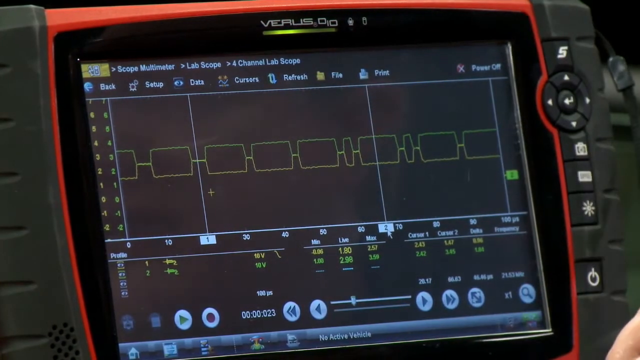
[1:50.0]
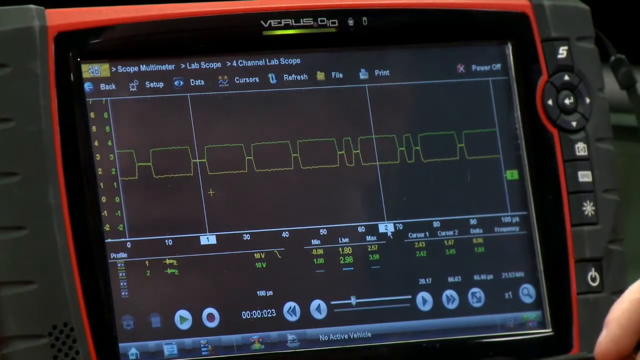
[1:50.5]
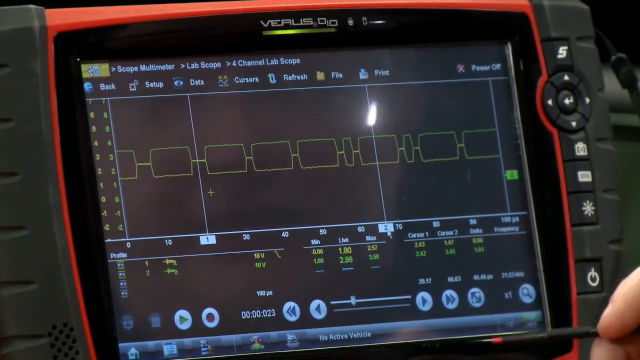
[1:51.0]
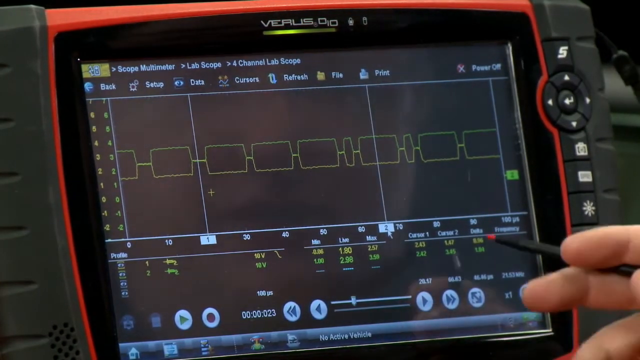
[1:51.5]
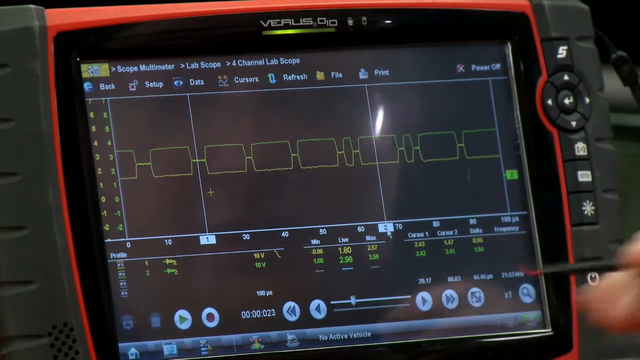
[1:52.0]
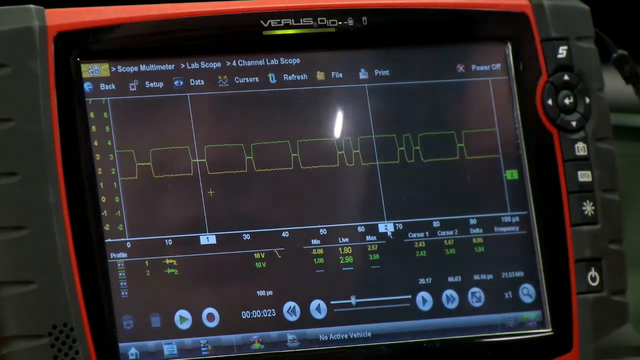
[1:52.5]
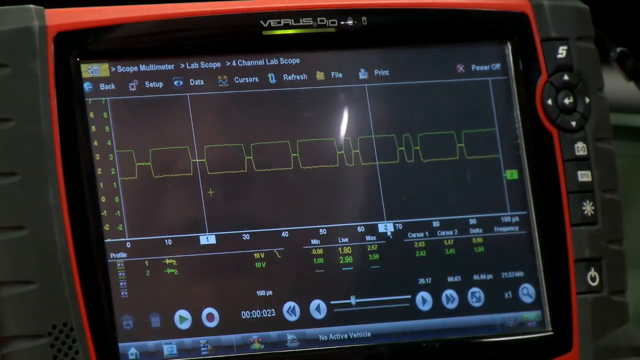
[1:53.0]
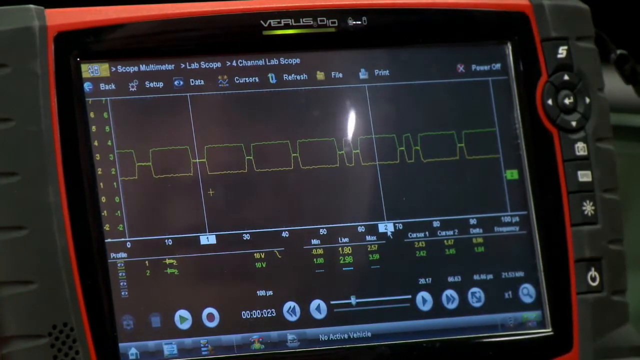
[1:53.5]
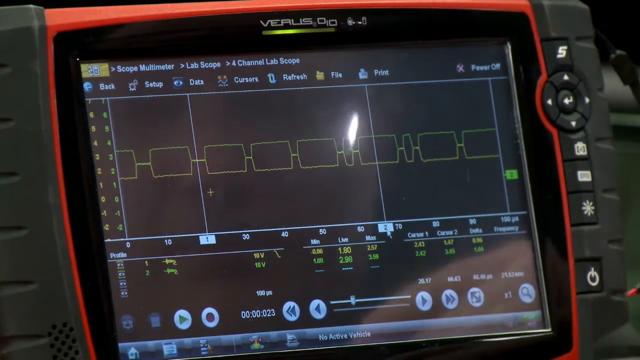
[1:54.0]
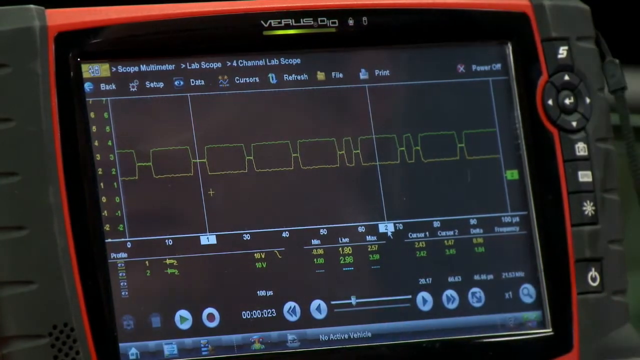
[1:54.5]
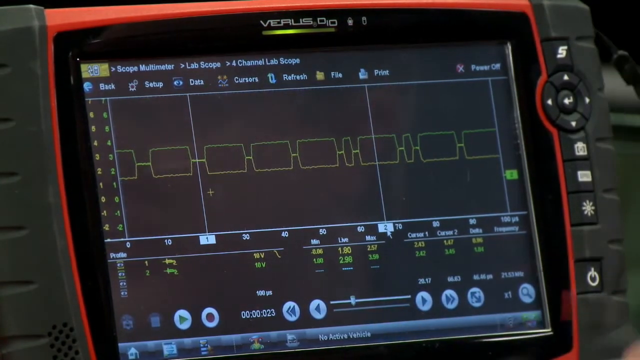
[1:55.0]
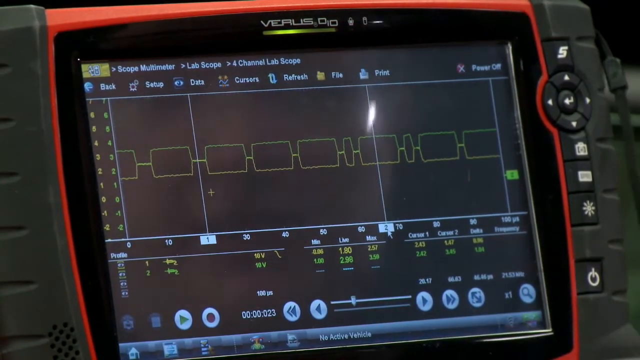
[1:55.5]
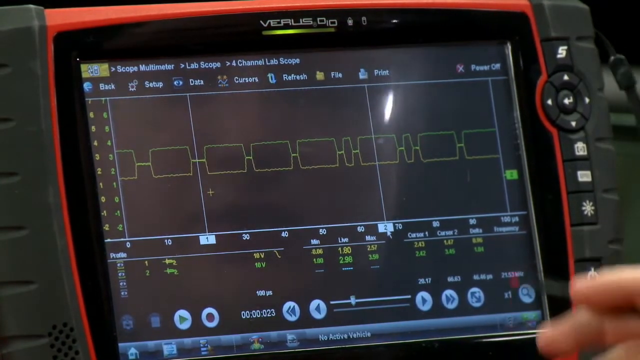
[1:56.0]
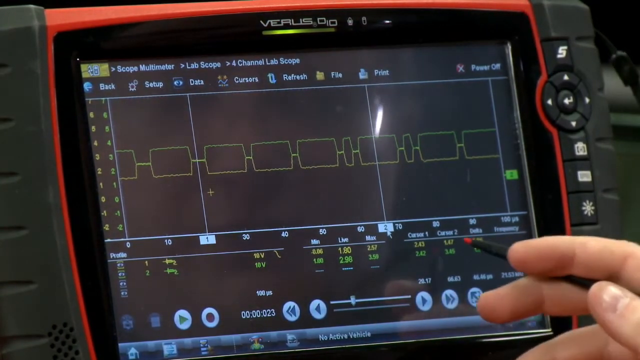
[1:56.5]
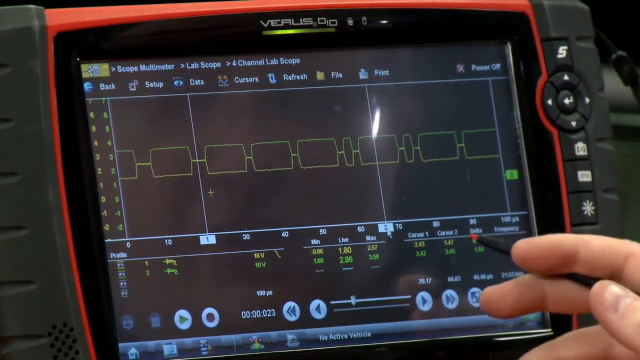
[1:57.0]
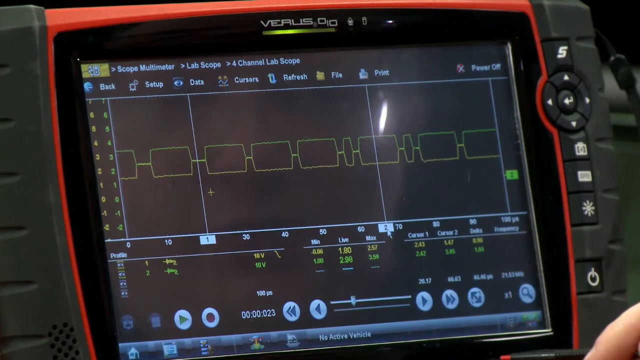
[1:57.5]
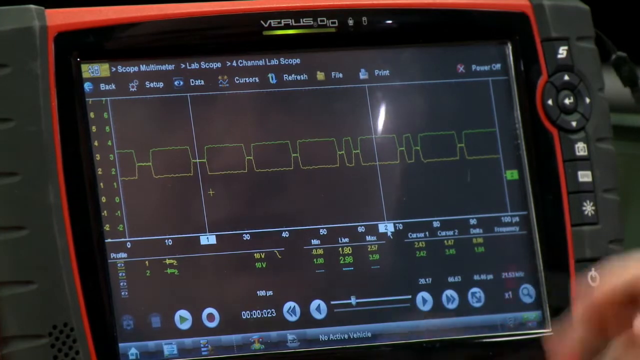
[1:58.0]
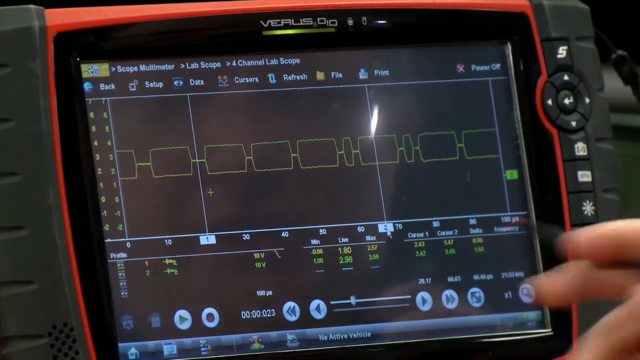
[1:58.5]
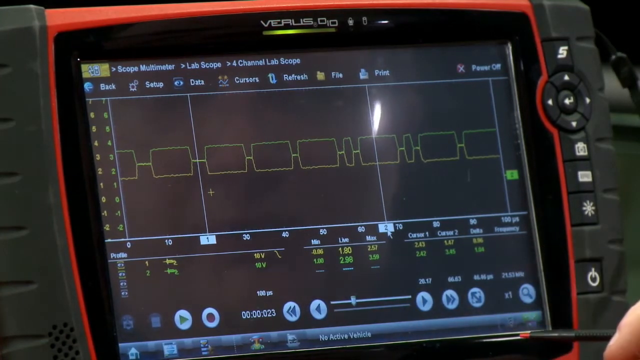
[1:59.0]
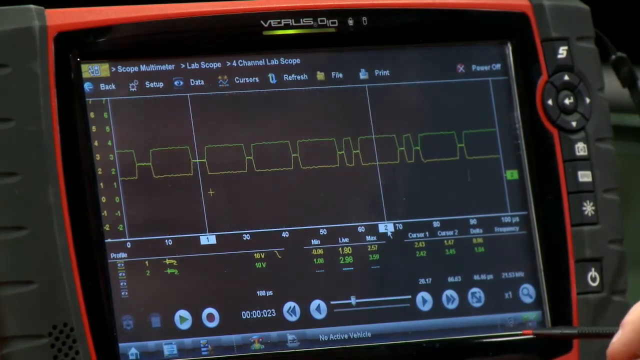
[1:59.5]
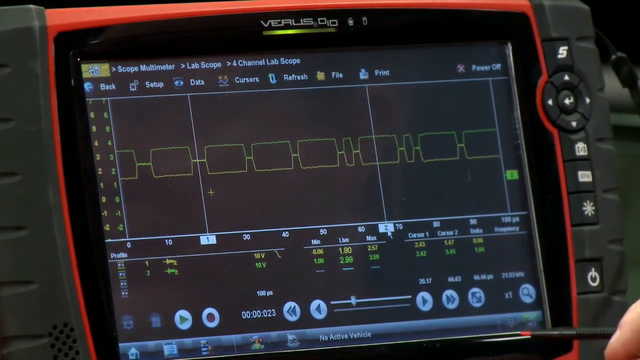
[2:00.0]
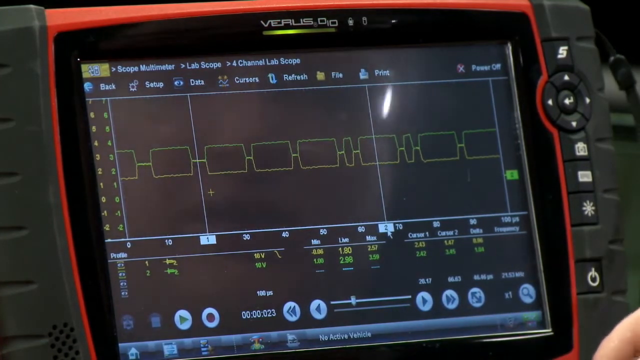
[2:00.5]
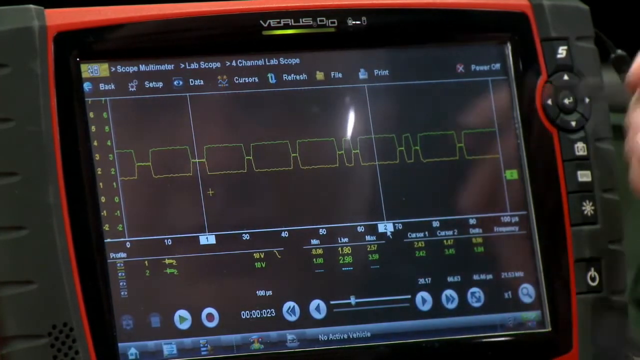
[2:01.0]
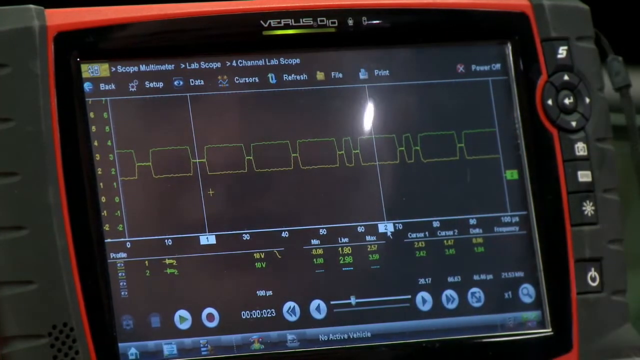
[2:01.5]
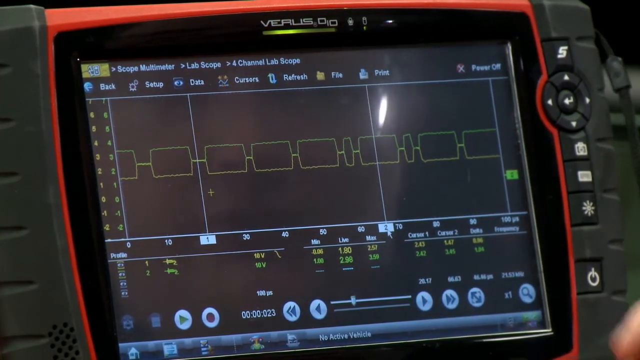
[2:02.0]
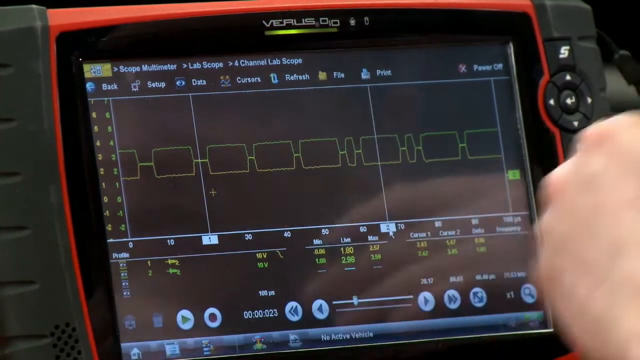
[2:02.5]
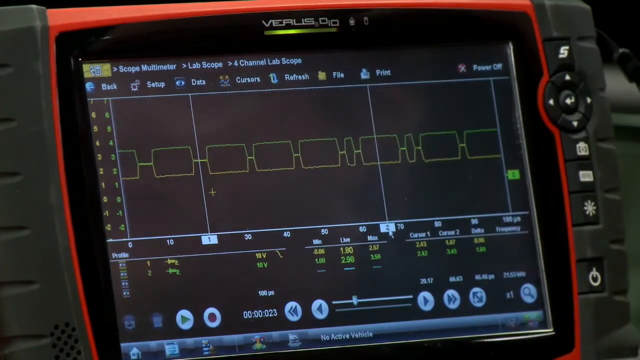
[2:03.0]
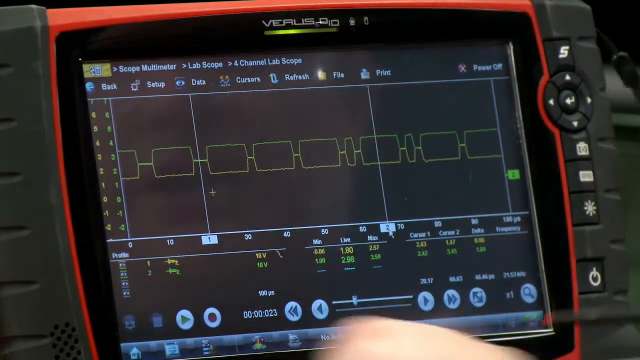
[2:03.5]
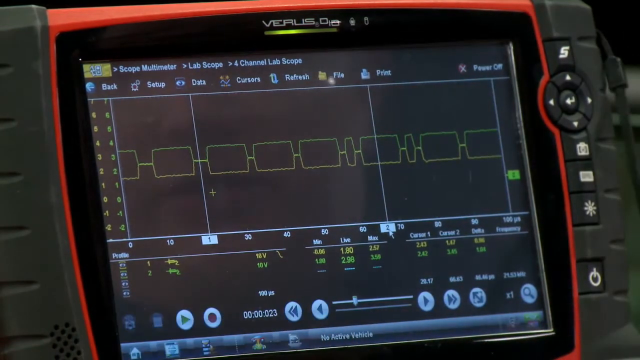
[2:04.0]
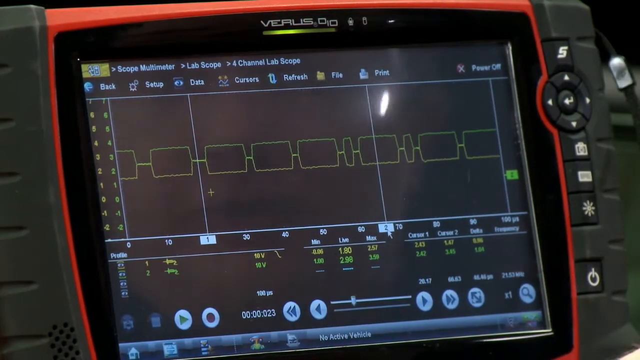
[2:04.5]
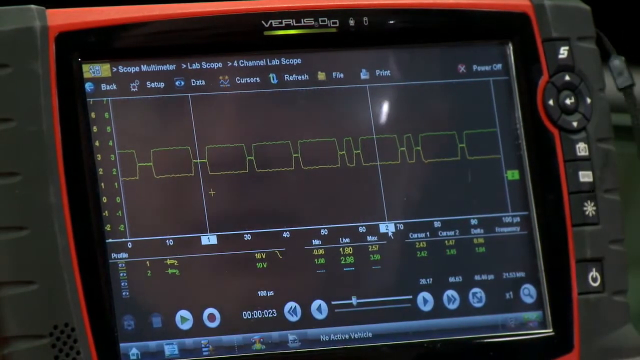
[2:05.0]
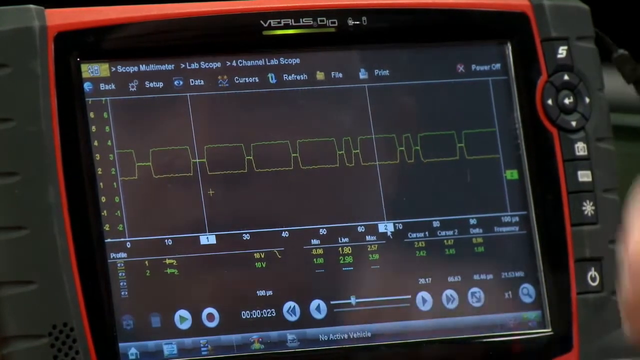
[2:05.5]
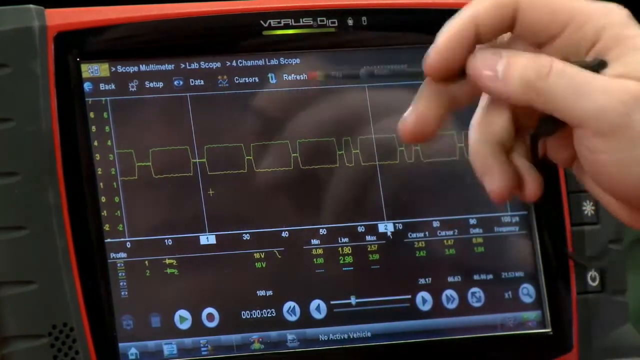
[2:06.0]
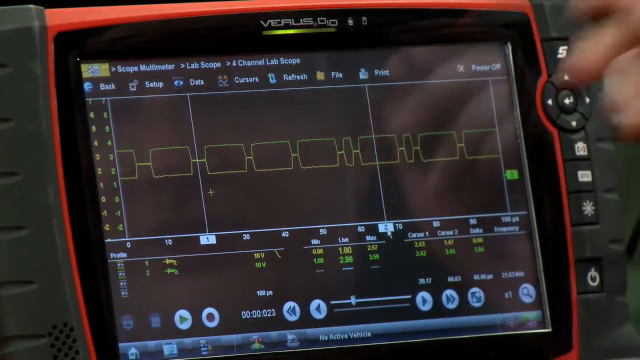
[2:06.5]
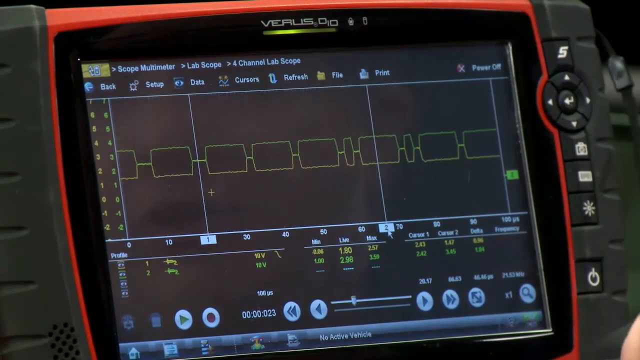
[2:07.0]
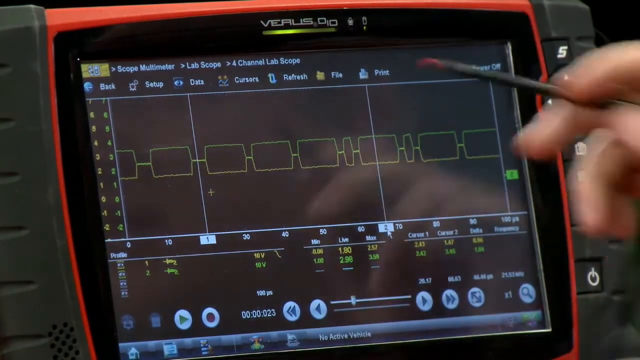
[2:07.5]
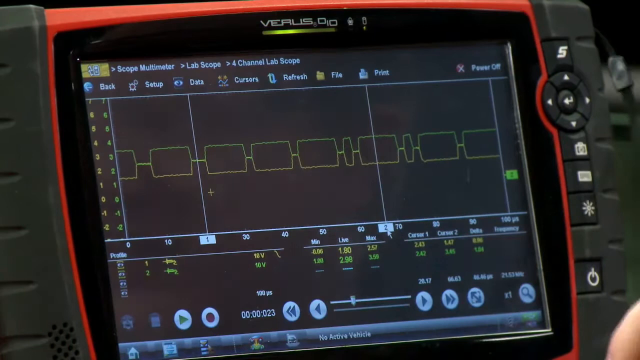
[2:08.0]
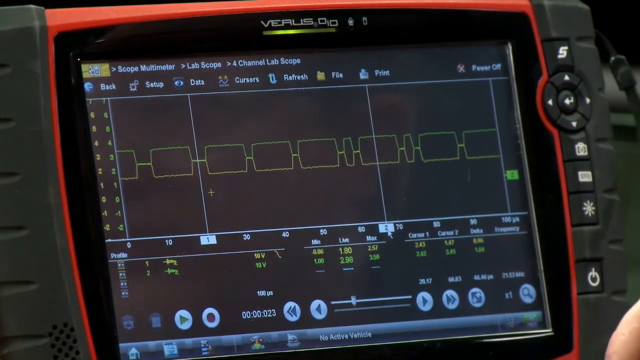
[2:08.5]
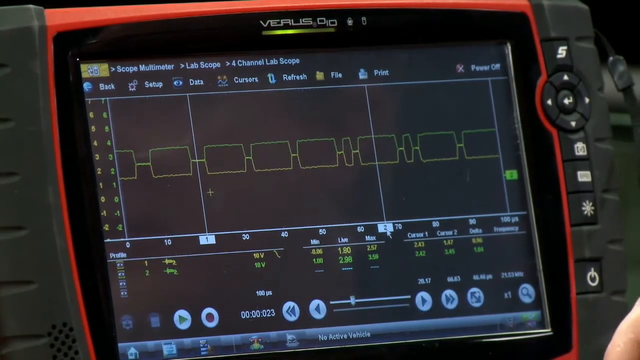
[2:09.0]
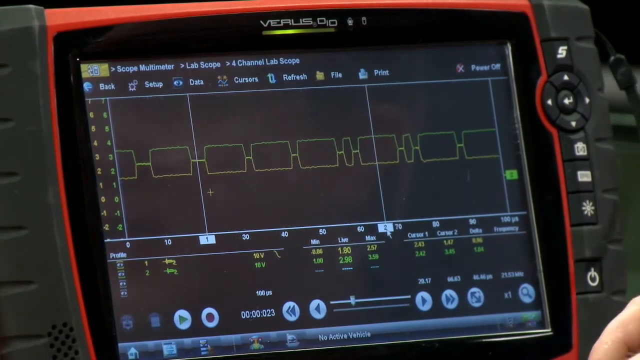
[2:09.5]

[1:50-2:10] Jason, the field trainer, continues pointing the stylus pen at various information on the Versus display, and his reflection is visible in it. He points to several numbers near the bottom and to the rectangular shapes that scroll from right to left in the middle of the display. The display shows "lab scope" and "four channel lab scope," with subheadings "back," "setup," "data," "cursors," "refresh," "files" and "print," and "power off" in the right-hand corner.